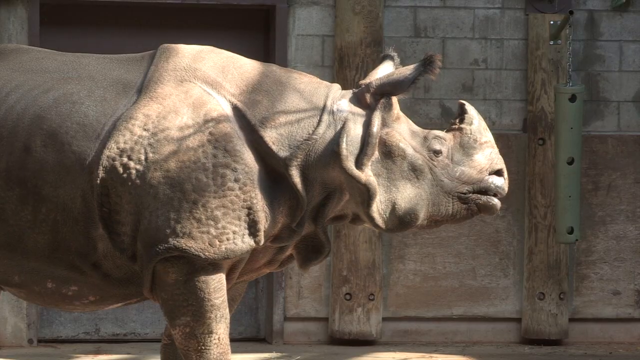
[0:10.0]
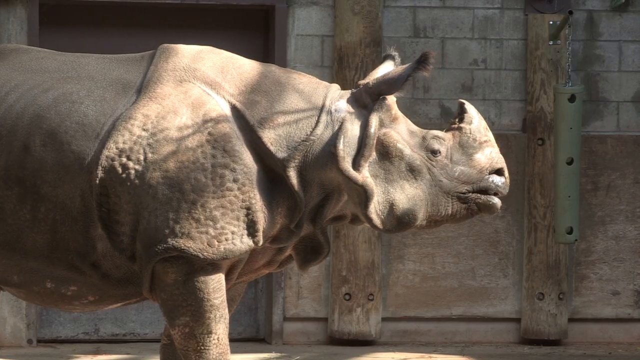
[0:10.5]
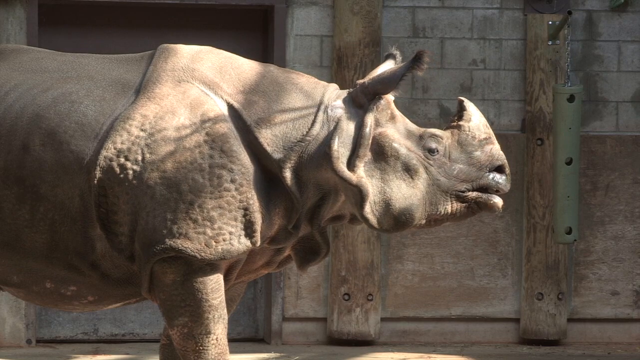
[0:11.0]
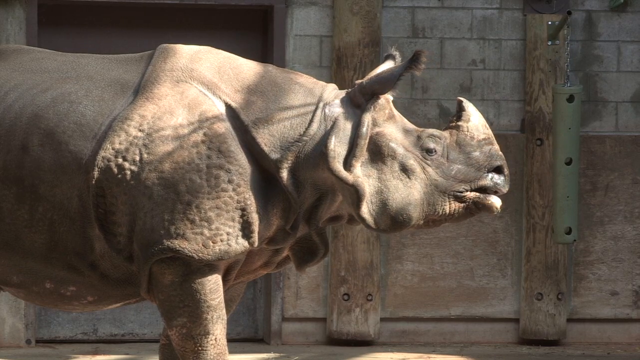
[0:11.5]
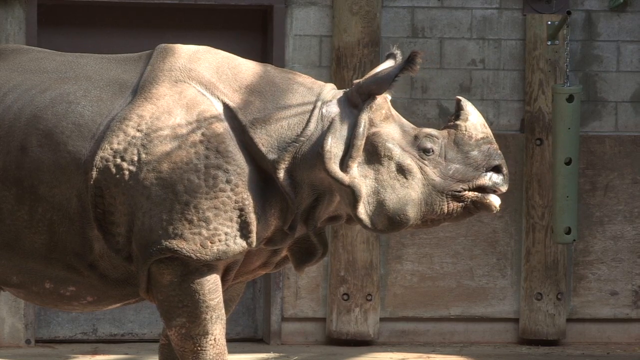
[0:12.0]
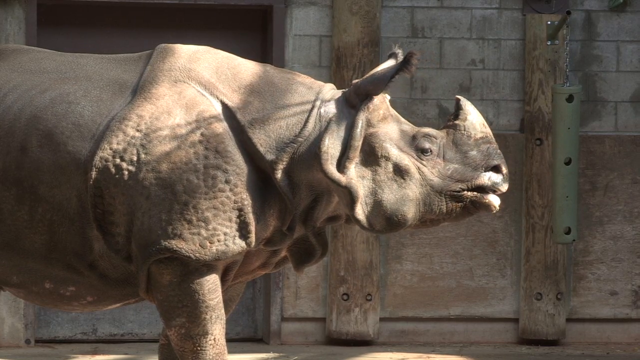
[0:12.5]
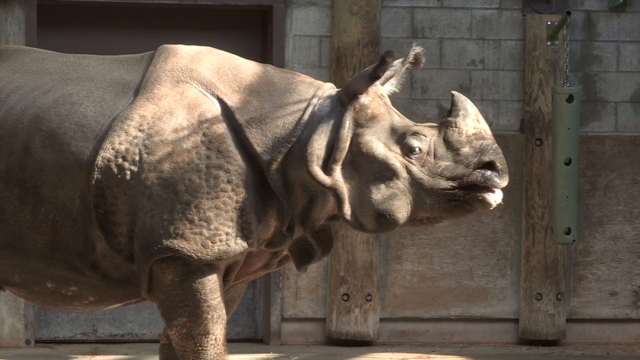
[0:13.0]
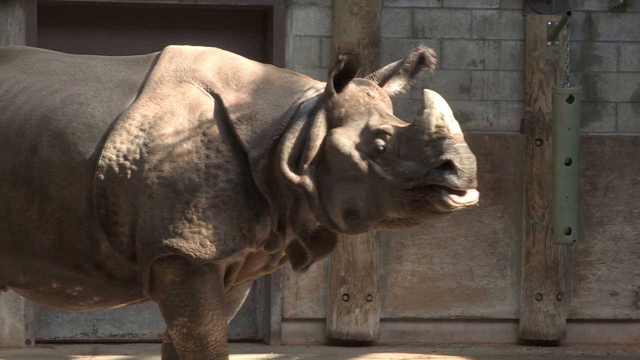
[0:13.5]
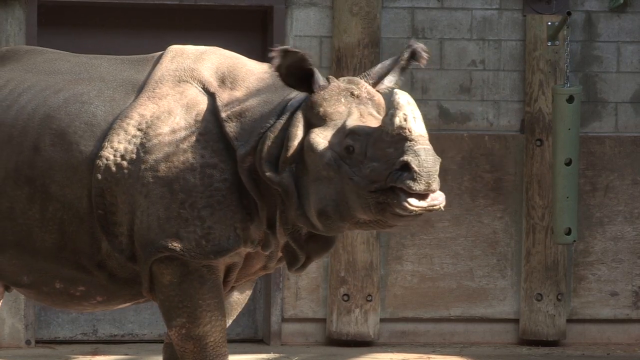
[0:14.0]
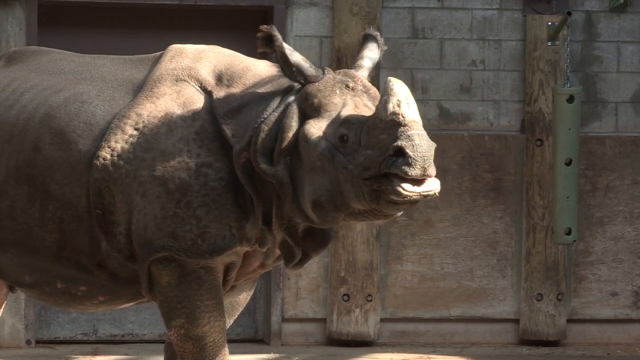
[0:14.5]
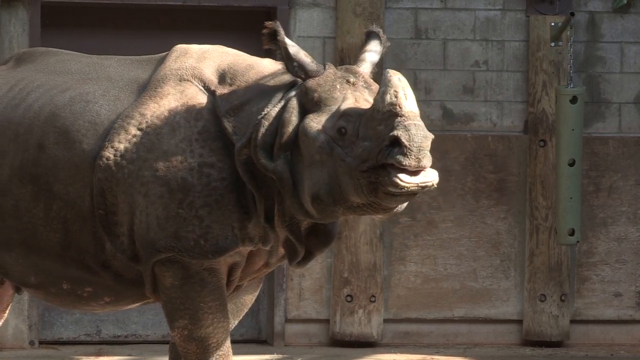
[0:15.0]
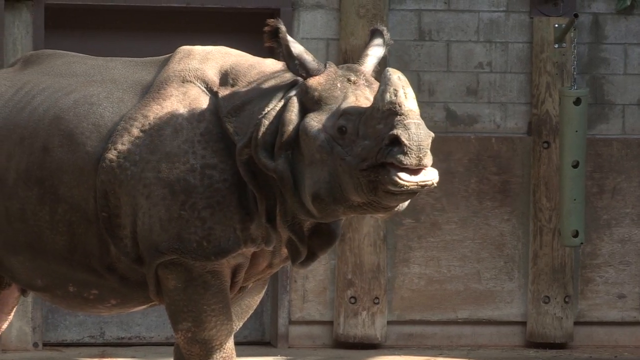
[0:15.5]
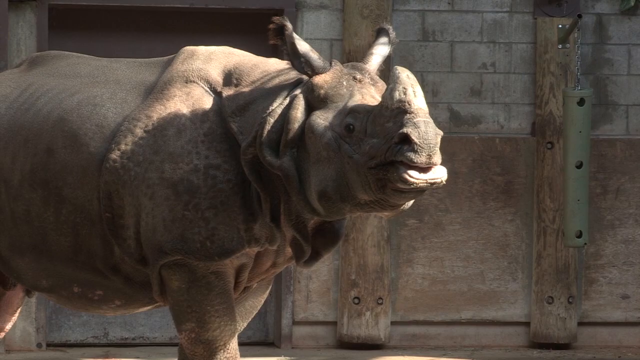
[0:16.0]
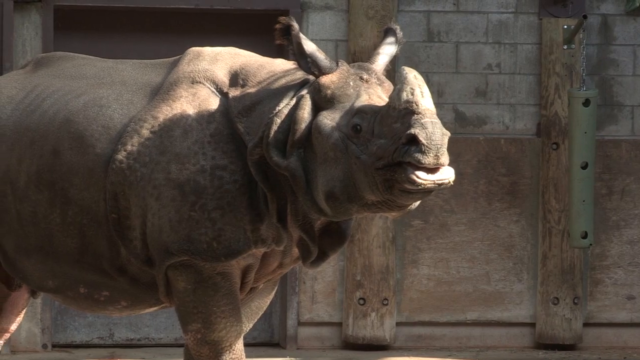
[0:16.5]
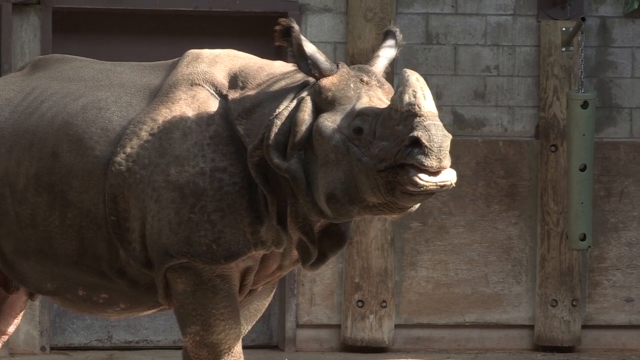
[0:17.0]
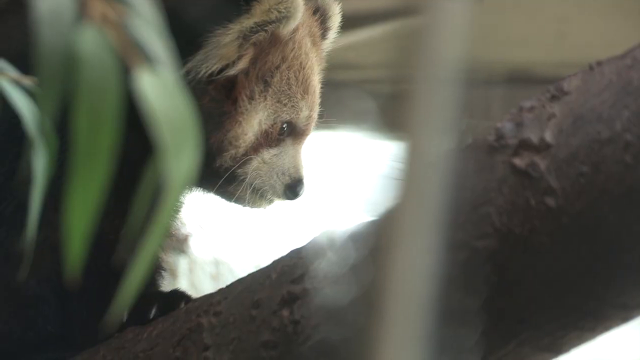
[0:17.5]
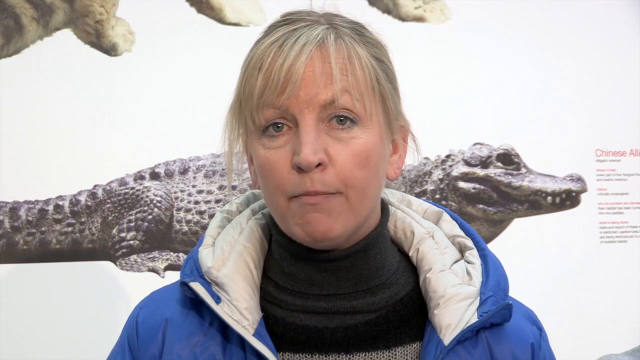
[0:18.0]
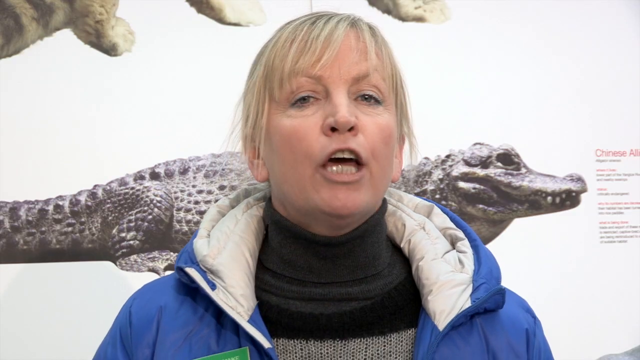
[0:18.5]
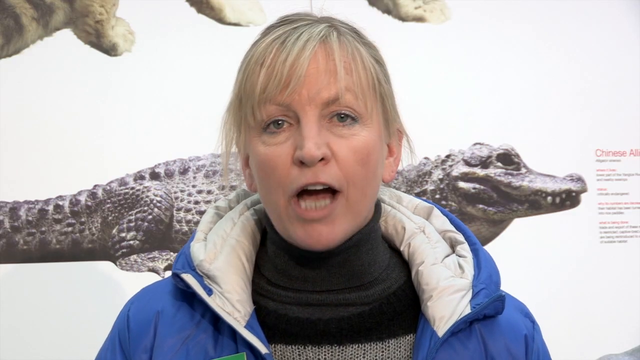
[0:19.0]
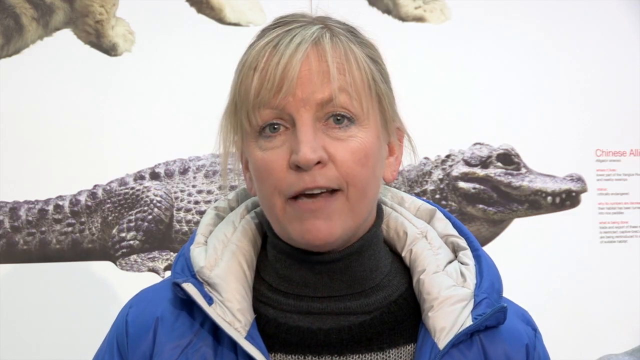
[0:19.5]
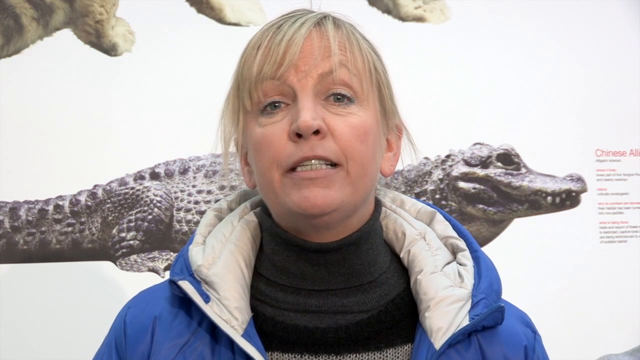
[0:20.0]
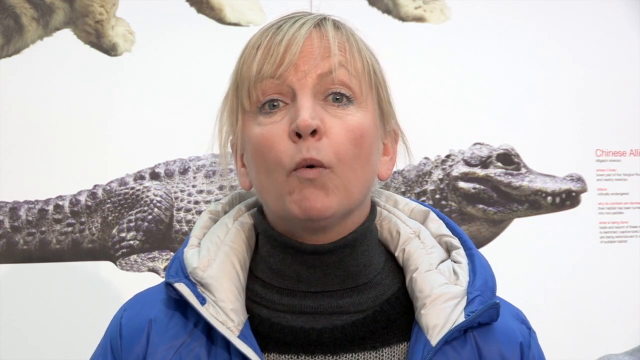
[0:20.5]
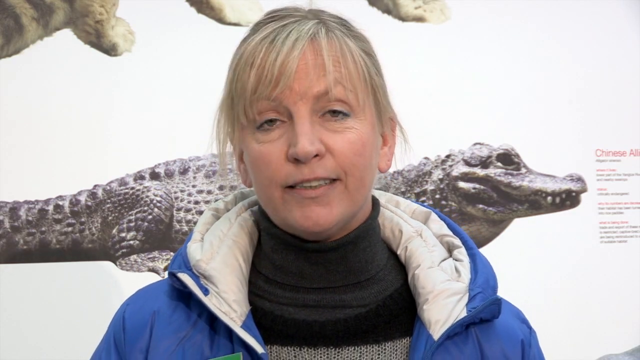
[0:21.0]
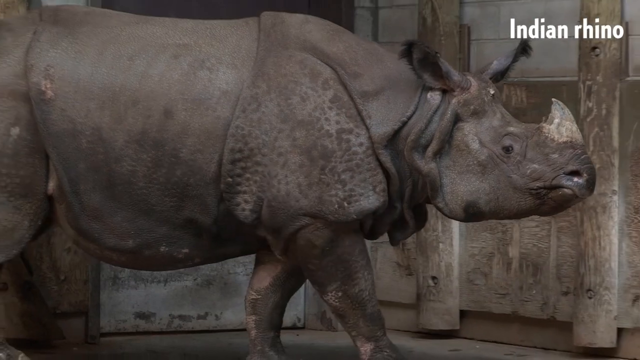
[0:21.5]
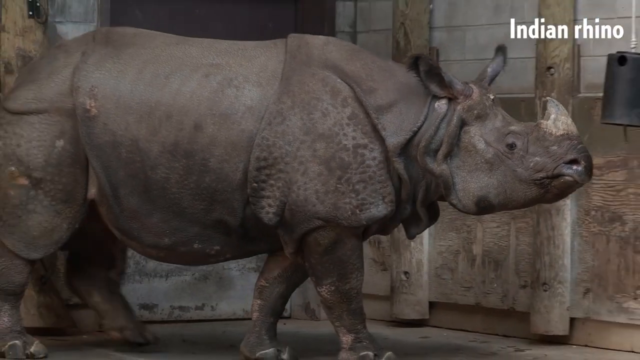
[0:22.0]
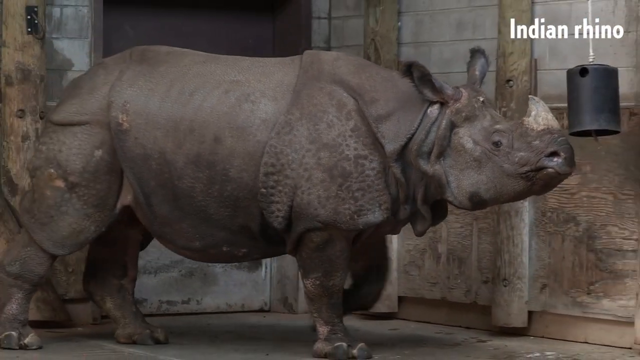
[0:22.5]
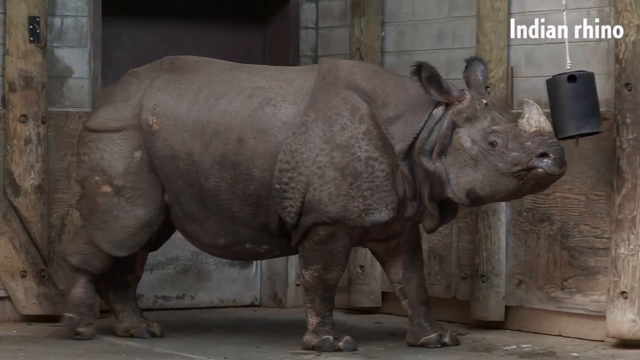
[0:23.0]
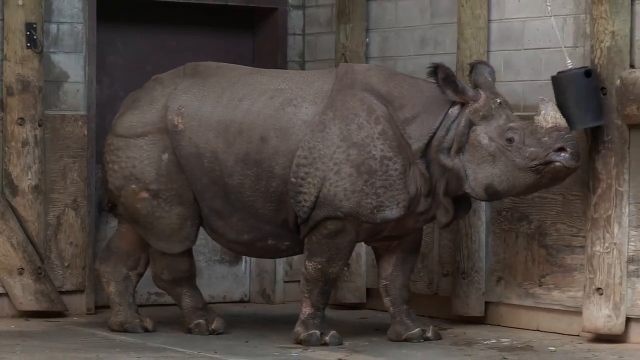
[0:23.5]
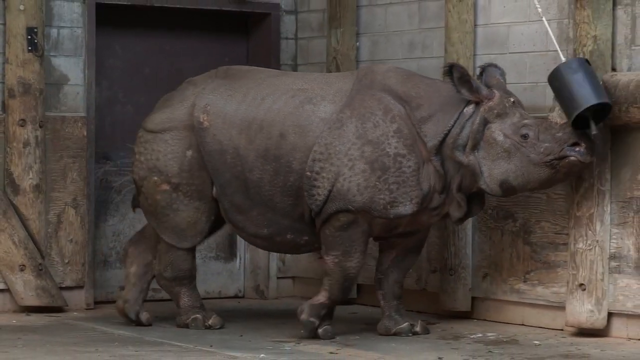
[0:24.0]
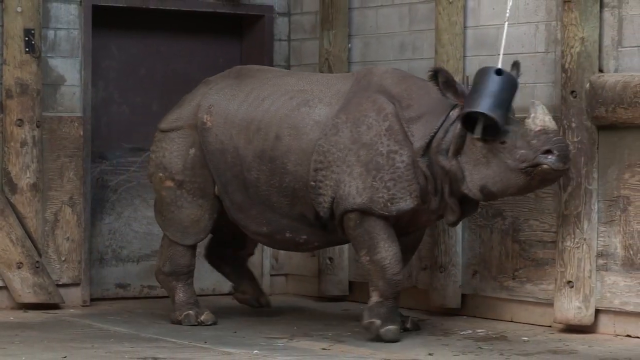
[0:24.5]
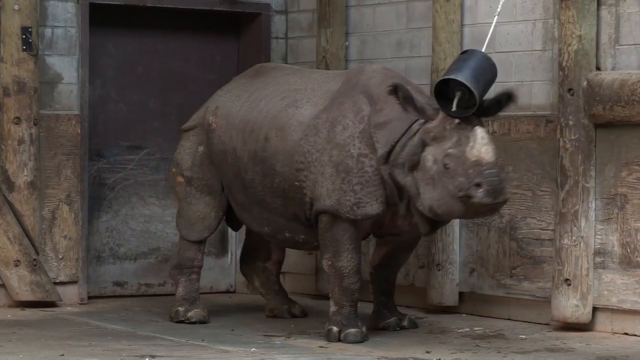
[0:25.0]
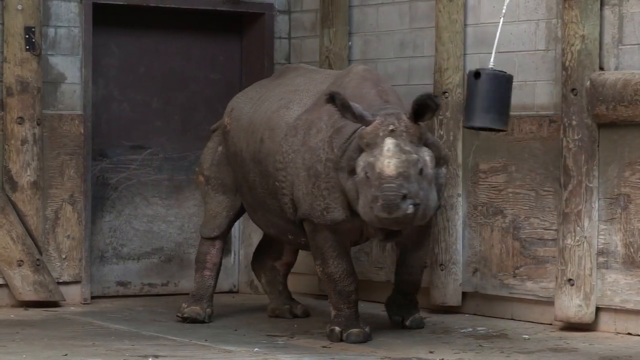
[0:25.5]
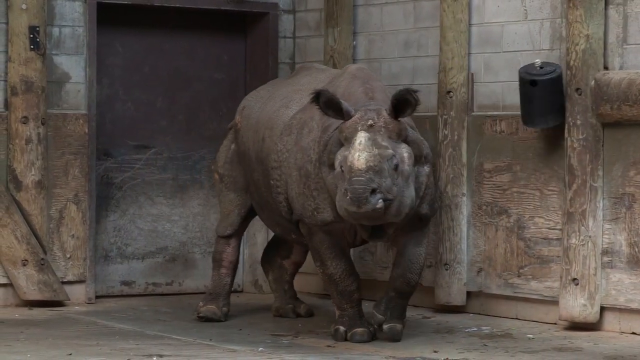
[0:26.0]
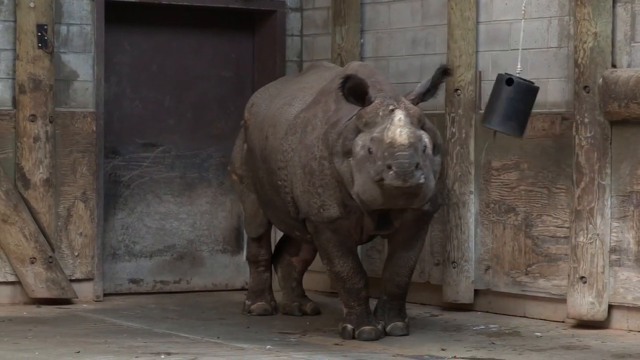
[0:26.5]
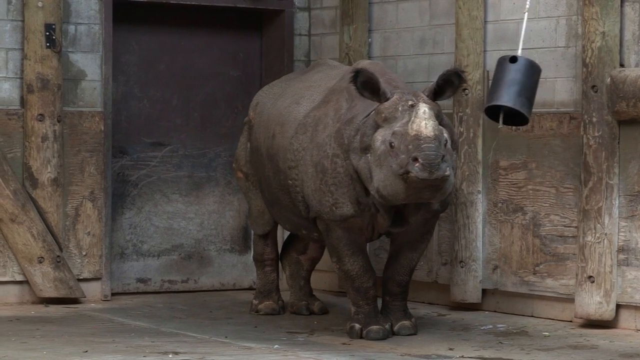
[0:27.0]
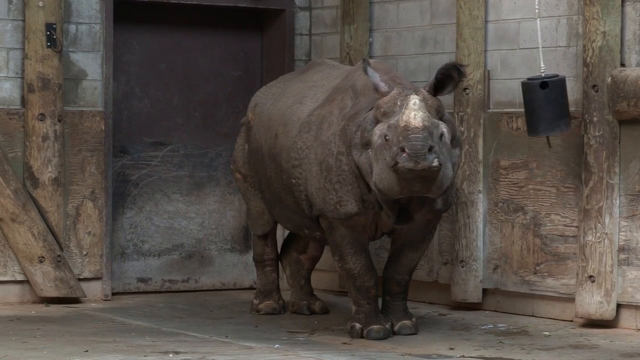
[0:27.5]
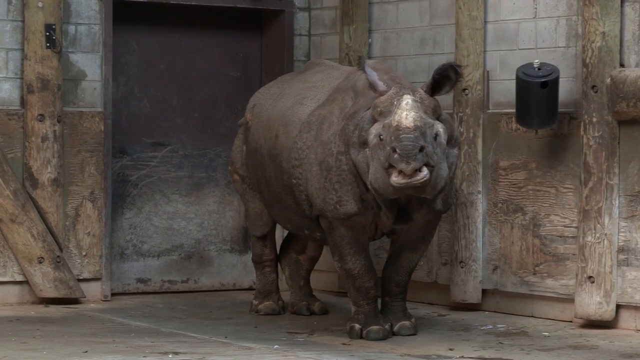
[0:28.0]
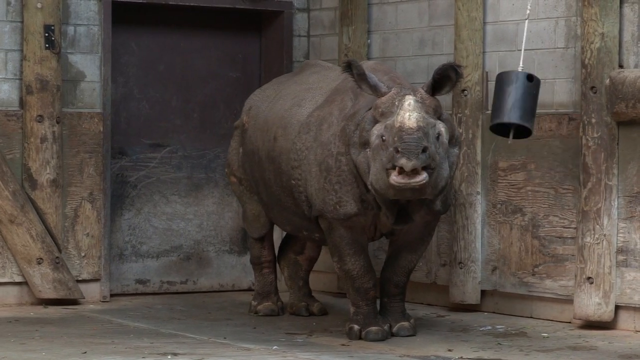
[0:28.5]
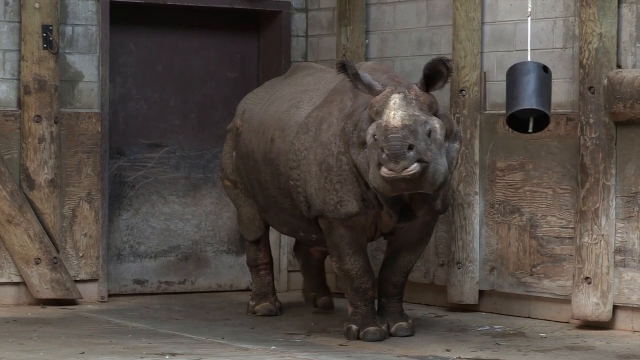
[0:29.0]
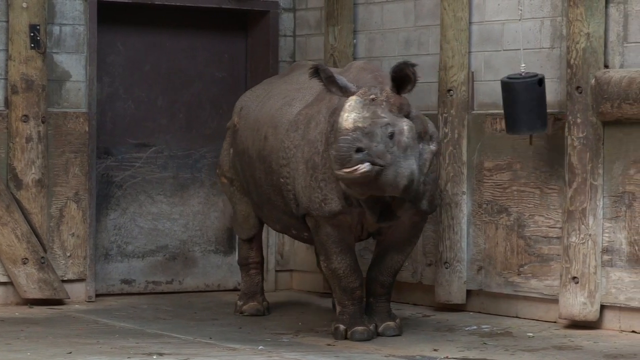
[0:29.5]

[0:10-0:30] A rhino with thick skin is shown, along with a red panda. The video goes back to the woman talking, with the baby alligator or caiman behind her; she has short blonde hair and is probably around 40 to 45. It then transitions to a large Indian rhino running its horn into what looks like some sort of bell, maybe playing or looking for entertainment in a zoo-style environment. The rhino looks around and appears to play.